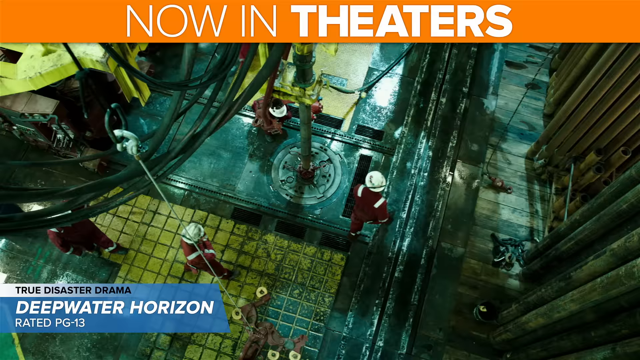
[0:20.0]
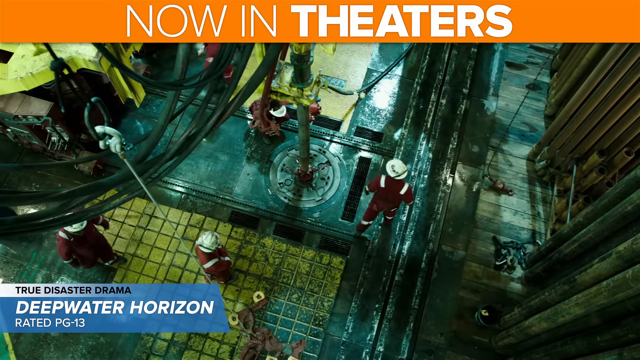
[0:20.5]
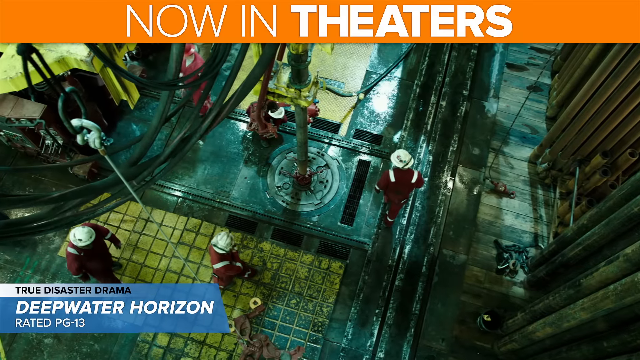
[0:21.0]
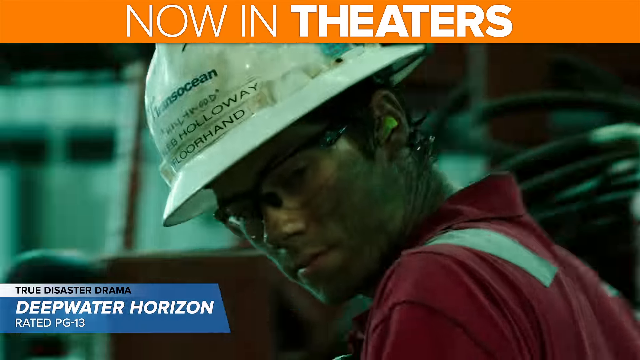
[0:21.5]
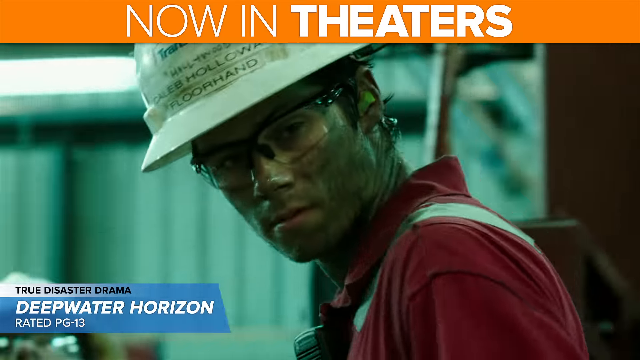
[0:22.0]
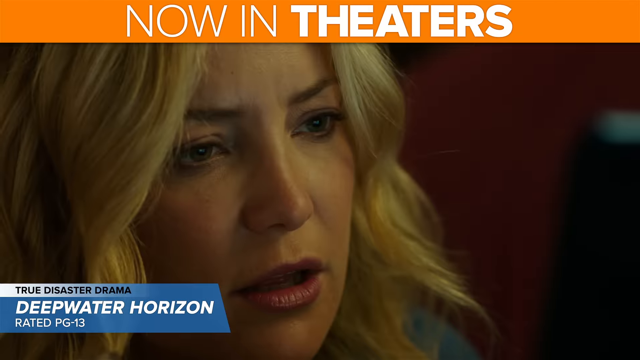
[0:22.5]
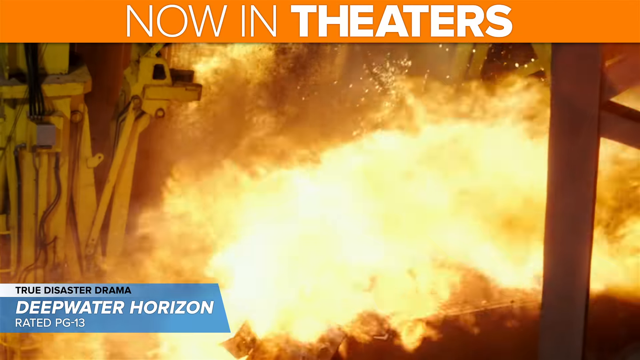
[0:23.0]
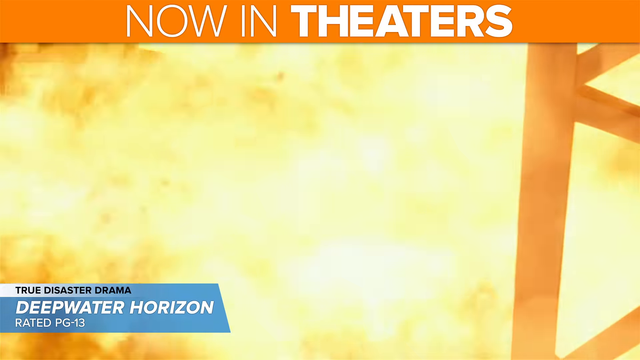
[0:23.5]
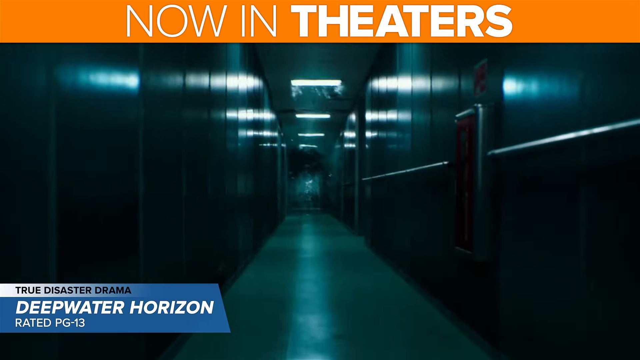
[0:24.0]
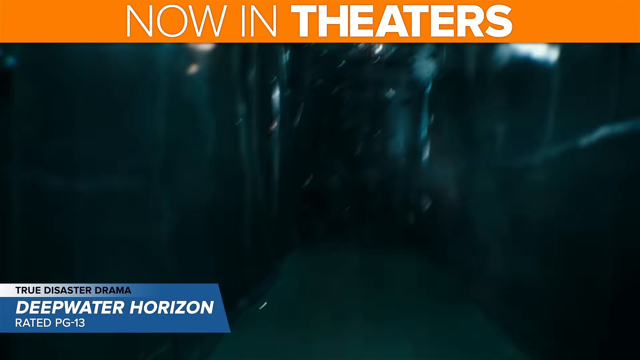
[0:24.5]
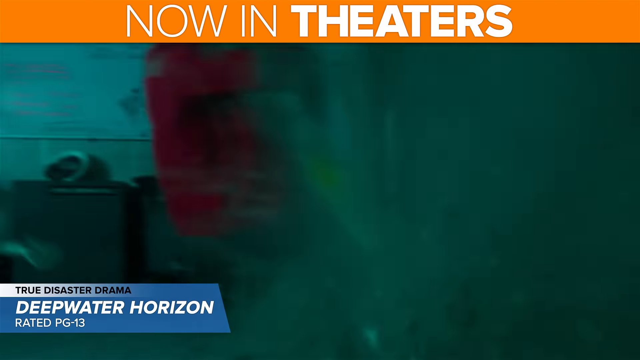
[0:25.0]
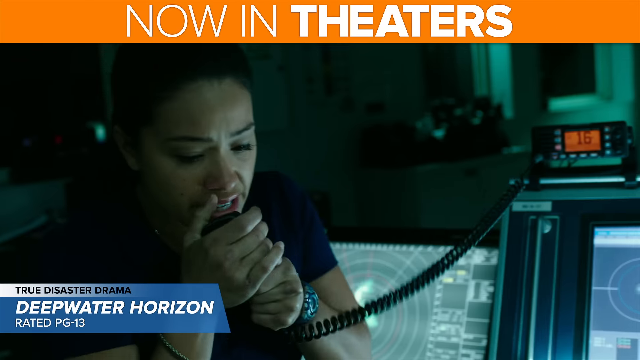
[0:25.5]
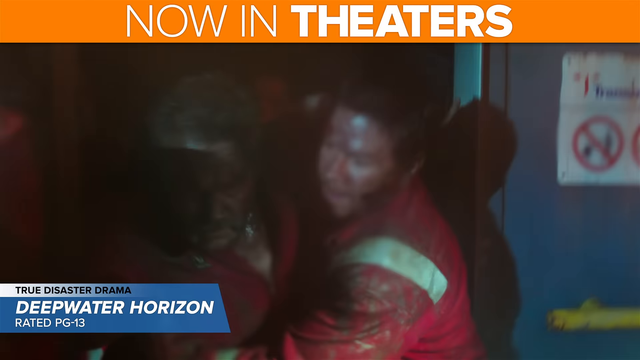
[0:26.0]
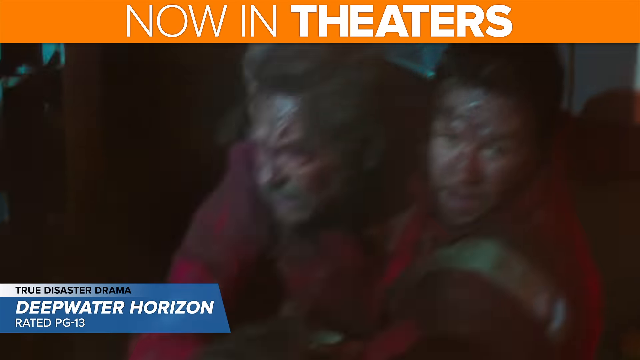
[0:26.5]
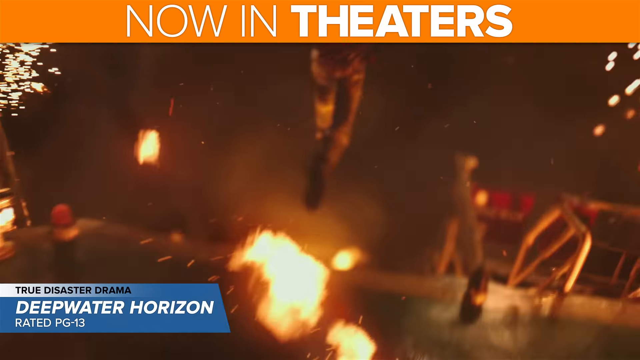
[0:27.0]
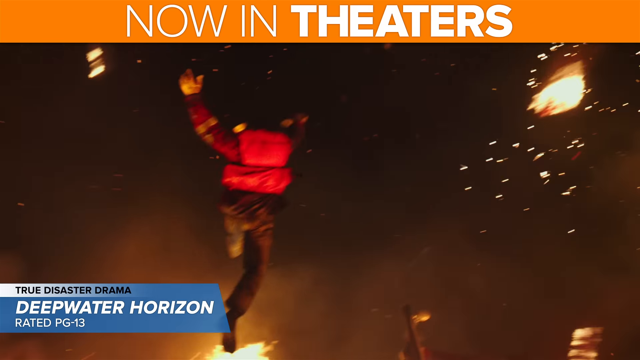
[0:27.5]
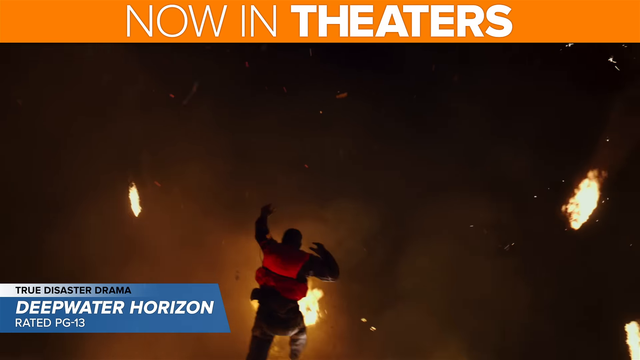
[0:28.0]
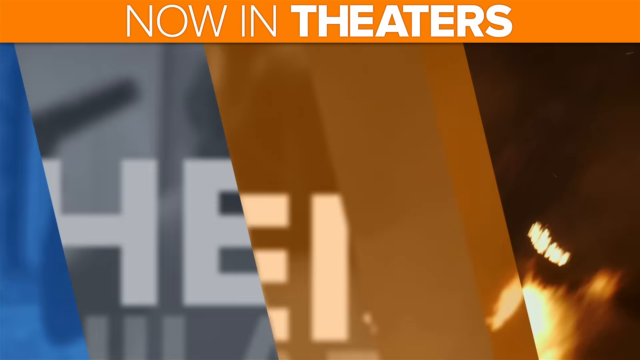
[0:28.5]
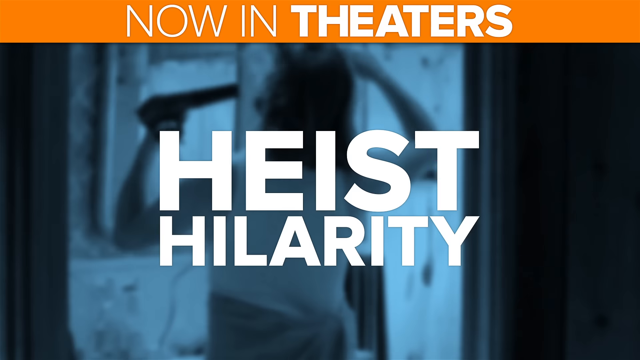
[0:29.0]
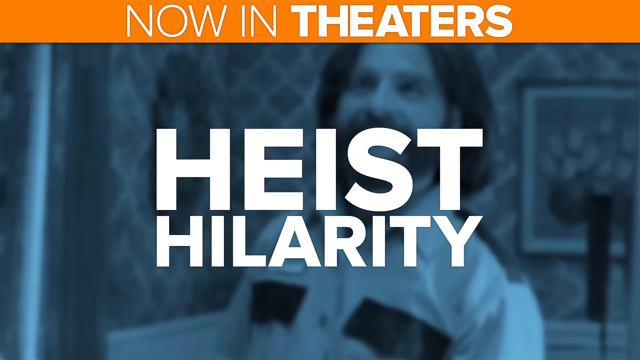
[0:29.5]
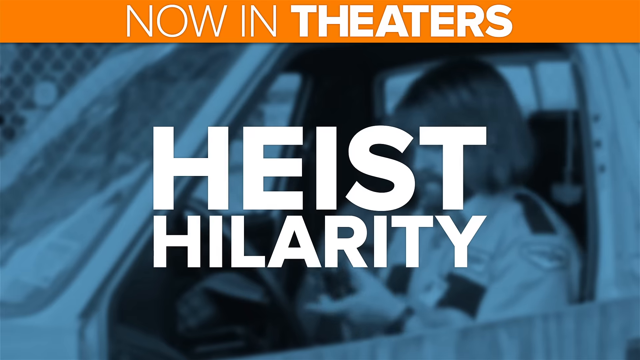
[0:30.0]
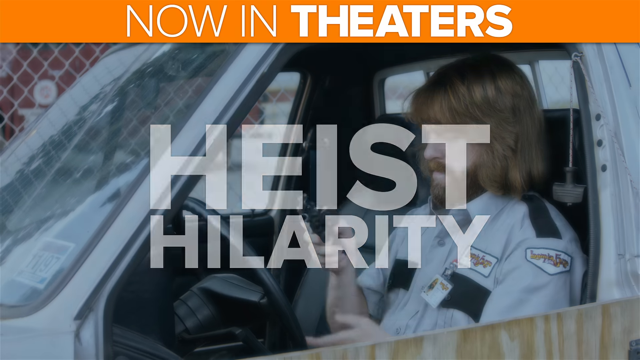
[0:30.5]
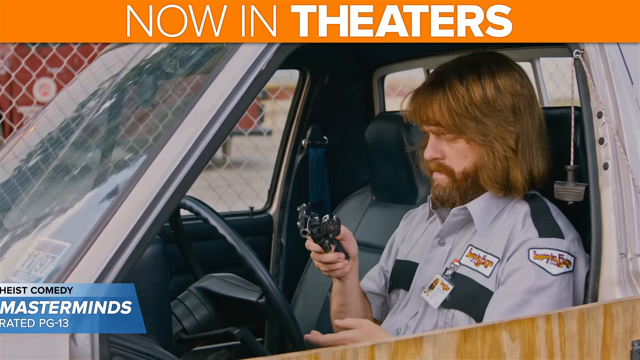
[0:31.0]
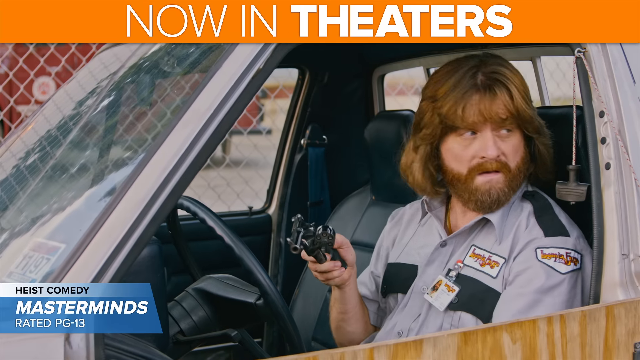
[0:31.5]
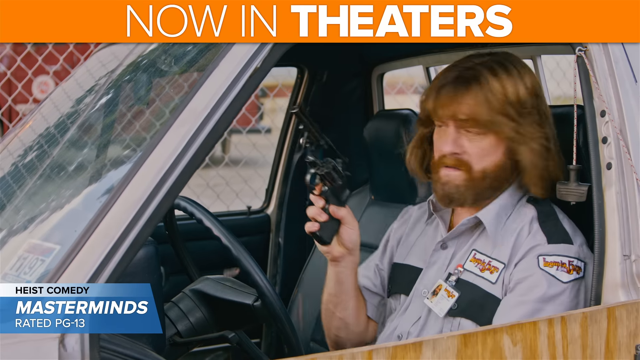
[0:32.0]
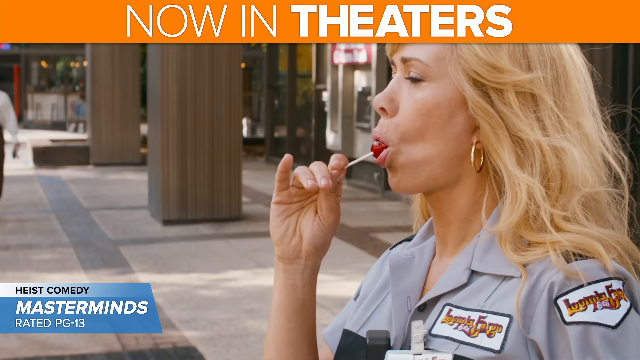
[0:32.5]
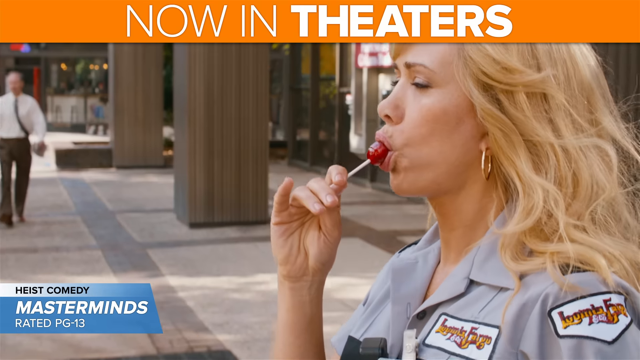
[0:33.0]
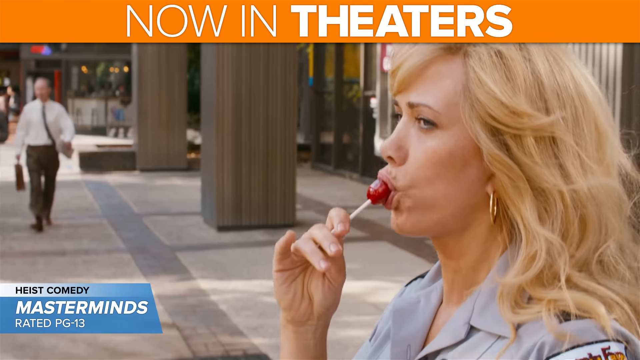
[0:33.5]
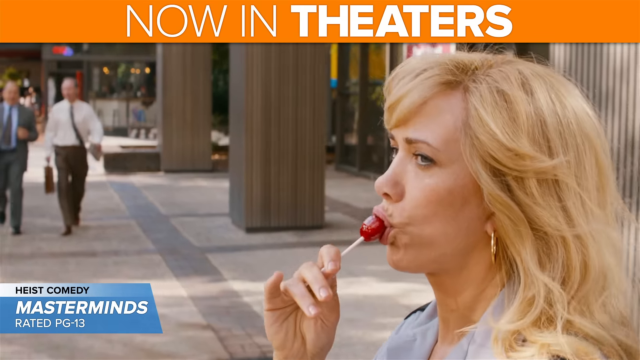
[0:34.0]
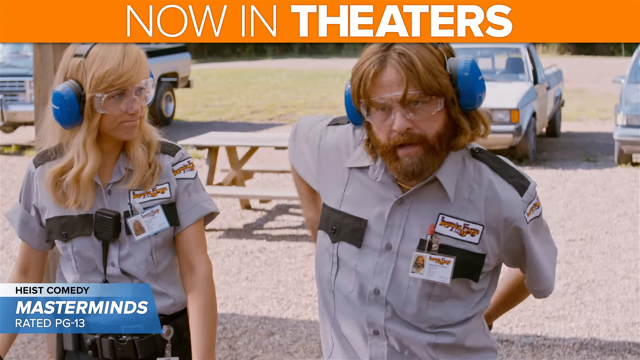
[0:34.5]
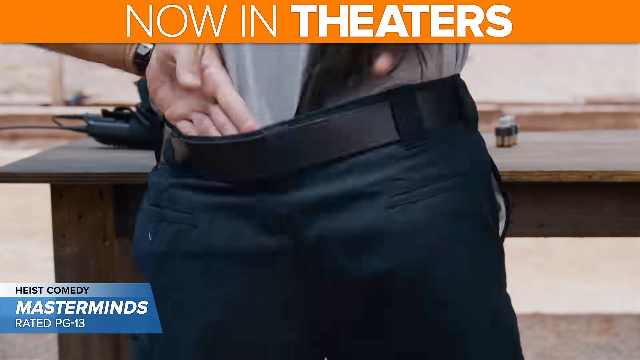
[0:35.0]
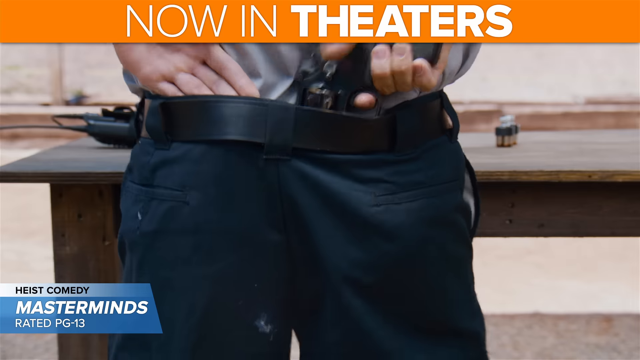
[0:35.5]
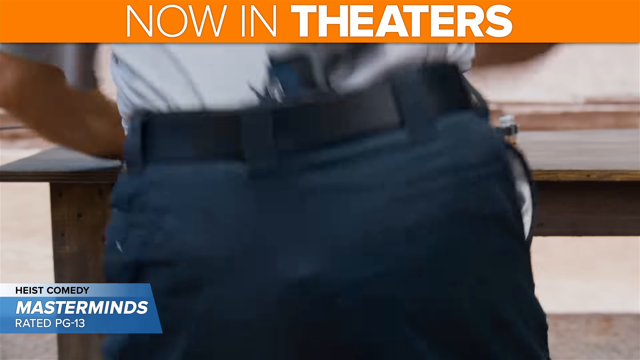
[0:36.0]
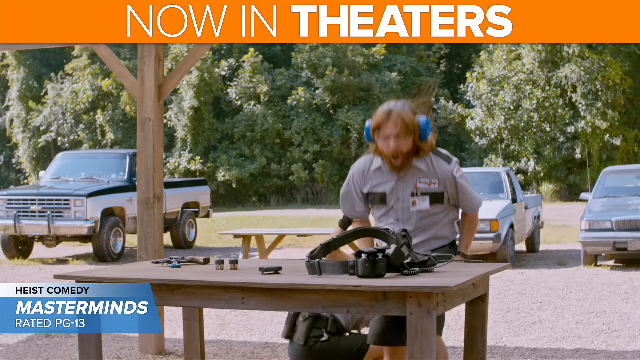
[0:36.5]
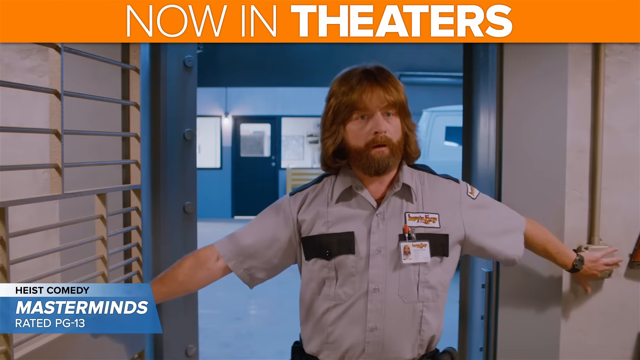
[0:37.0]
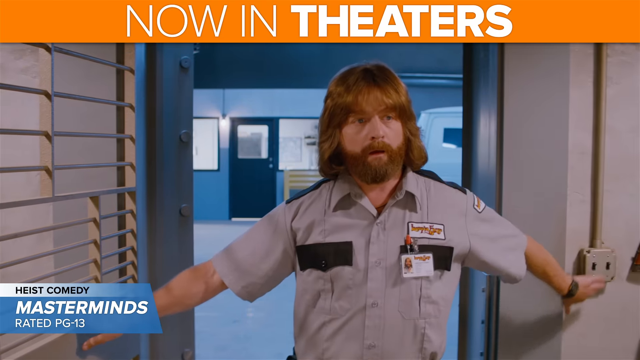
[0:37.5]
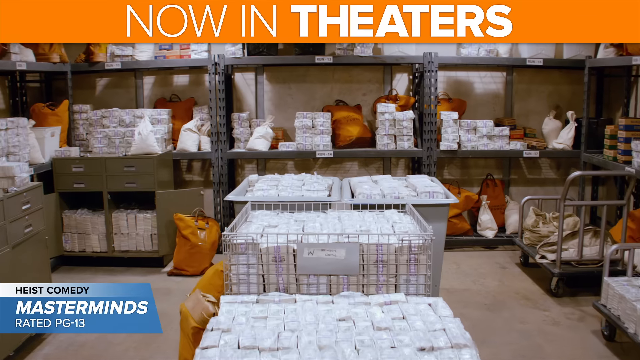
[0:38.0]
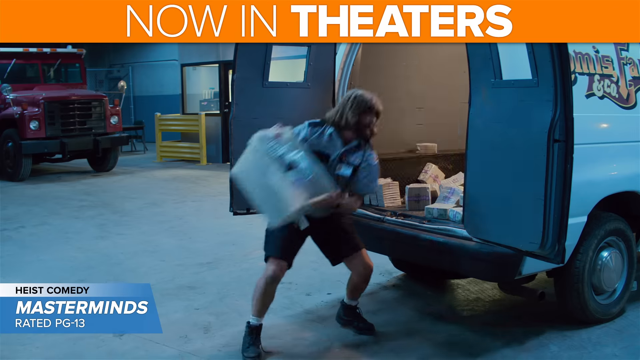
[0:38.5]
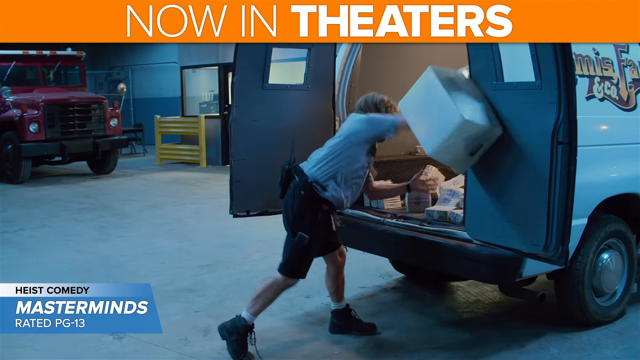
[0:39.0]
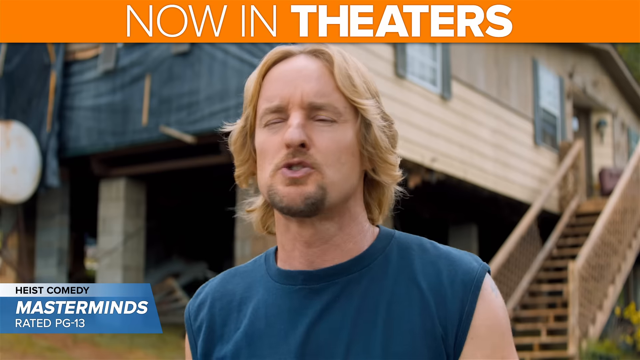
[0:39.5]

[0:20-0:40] A scene, apparently from a movie, shows people moving around, seemingly at a disaster or similar event. A PG-13 rating appears. Workers are on a ridge, possibly performing their duties, and there are red pipes where they are working. The place looks like a mine, and it seems they are mining something. Black and white people are working there and seem to be communicating with each other about their duties. It looks like an advertisement for a movie about a horizon disaster.